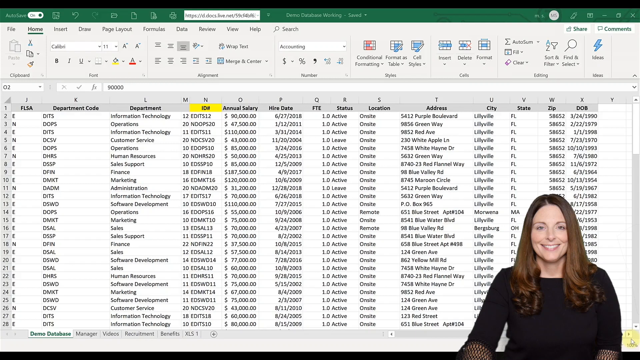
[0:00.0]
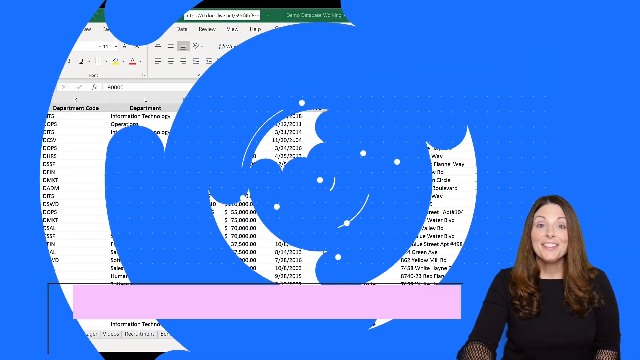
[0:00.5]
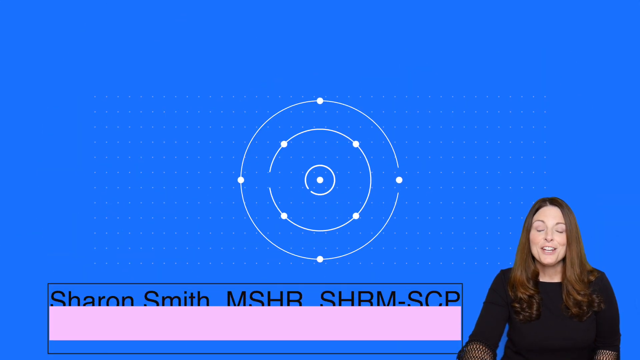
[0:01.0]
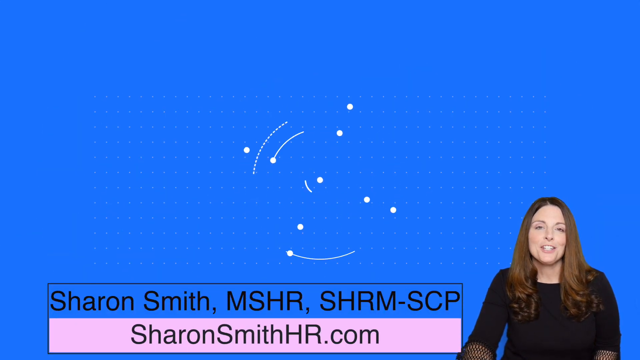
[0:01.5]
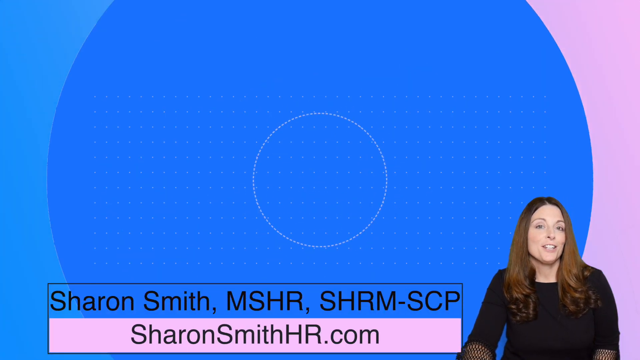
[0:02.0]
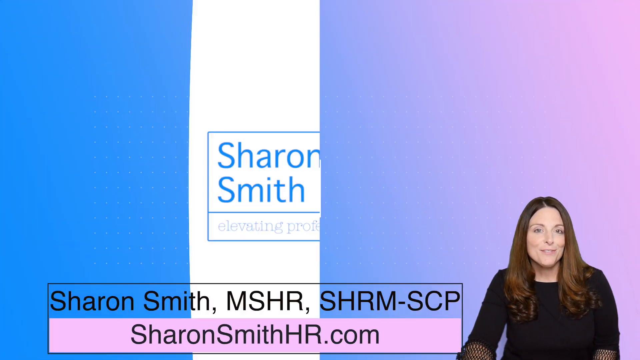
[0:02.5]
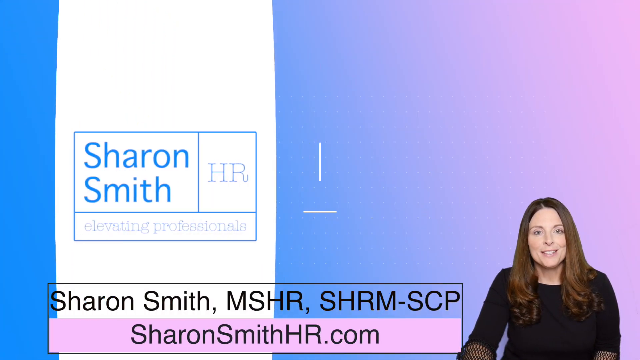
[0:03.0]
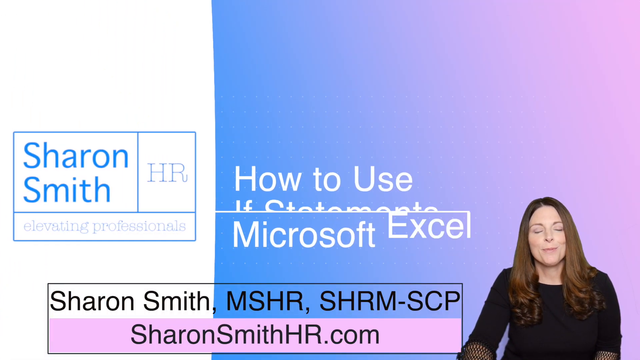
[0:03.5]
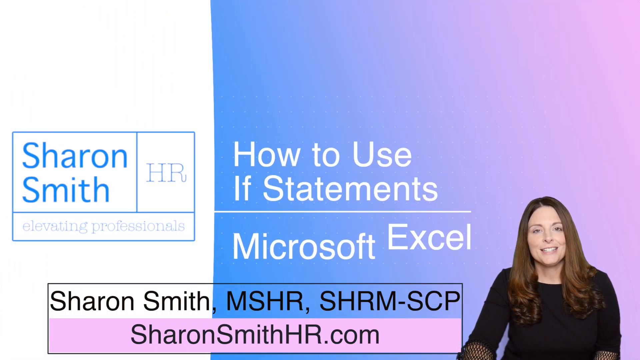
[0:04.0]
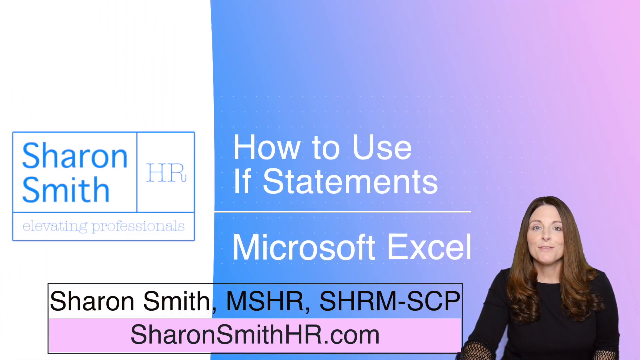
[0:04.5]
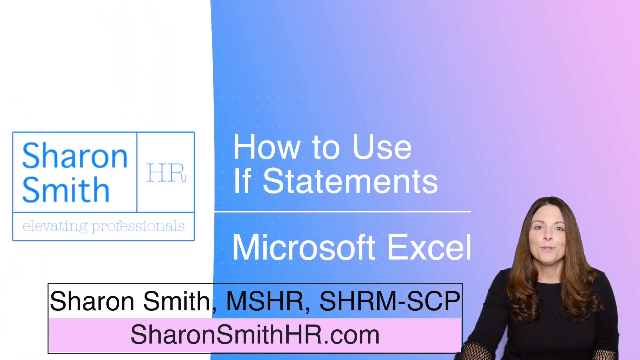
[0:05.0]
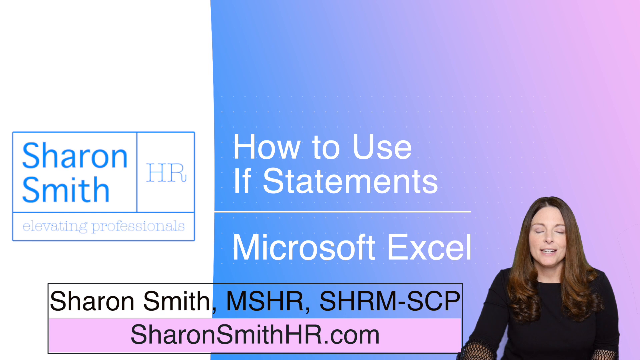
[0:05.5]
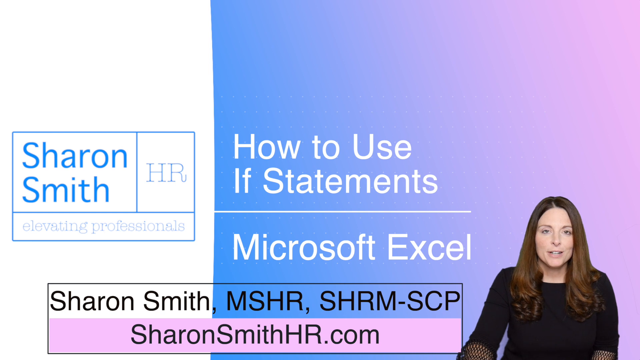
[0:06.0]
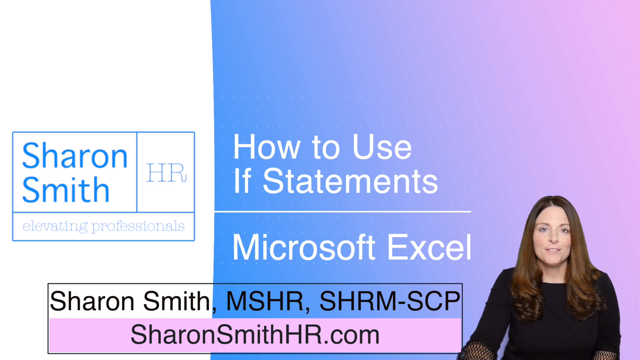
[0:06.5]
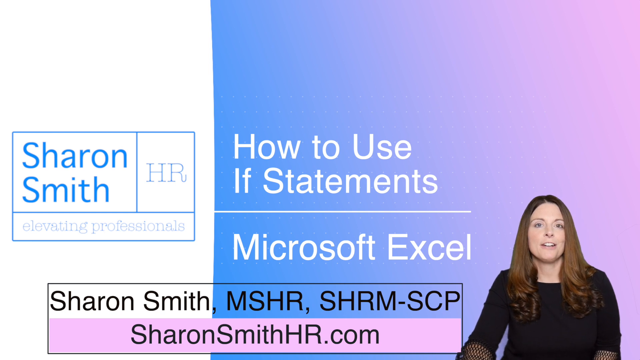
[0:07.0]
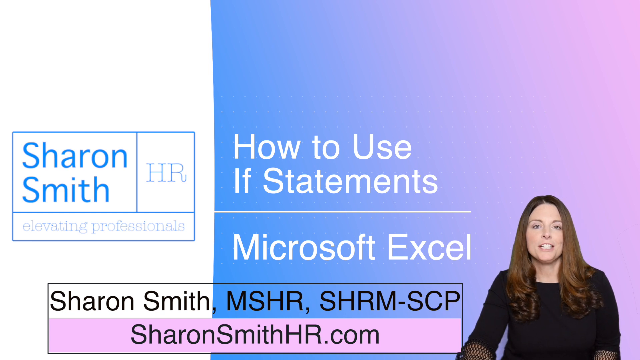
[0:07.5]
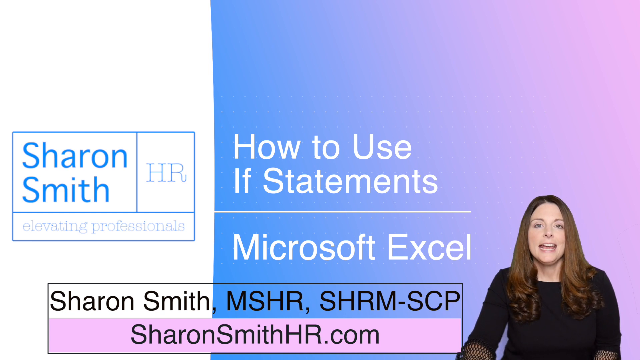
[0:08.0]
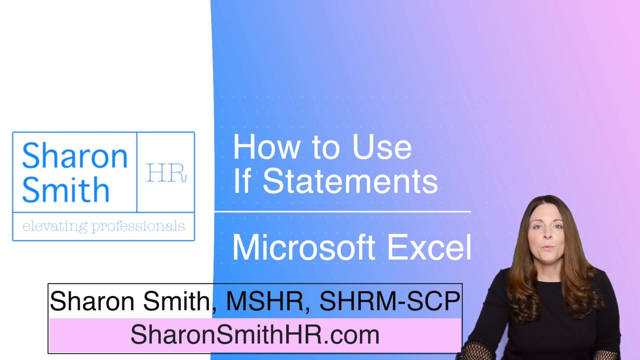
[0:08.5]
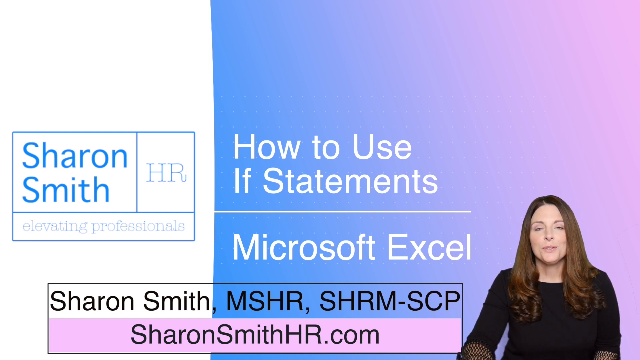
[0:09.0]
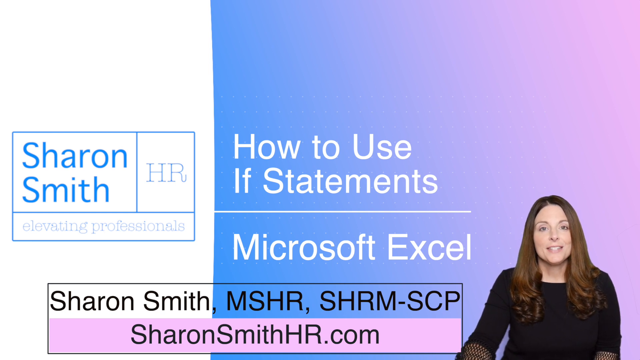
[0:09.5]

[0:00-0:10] The video opens on an Excel spreadsheet with numerous columns, with a woman on the right side of the frame. She is Caucasian with brown hair and is smiling. The columns list FLSA, department code, department, IDs, annual salary, hire date, status, location, address, city, state, zip, and date of birth; it looks like a list of employees for a particular company. The spreadsheet then disappears, and text at the bottom reads "Sharon Smith, MSHR, SHRM-SCP" along with a business website, "SharonSmithHR.com". On the left, text reads "Sharon Smith, HR, Elevating Professionals", and in the center, text reads "How to Use IF Statements, Microsoft Excel". Meanwhile the woman is visible on the right side of the screen, talking.